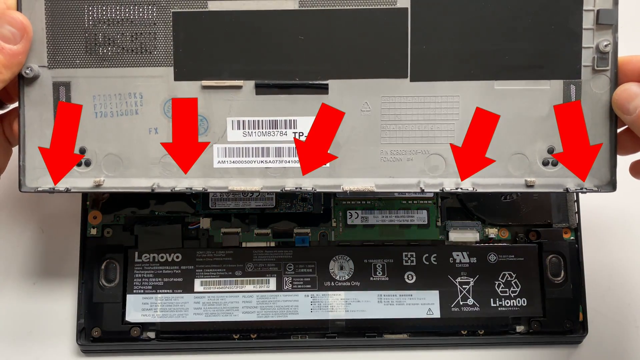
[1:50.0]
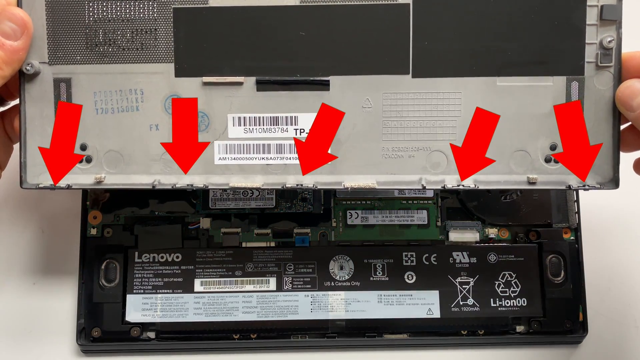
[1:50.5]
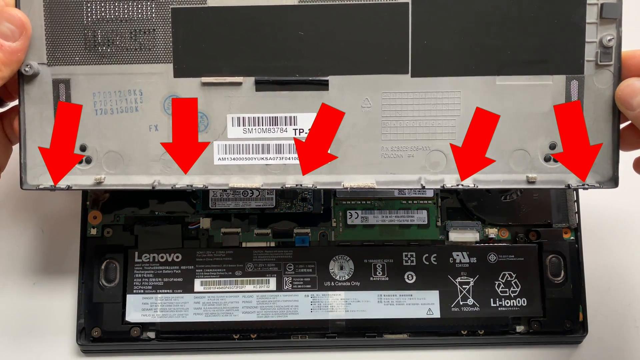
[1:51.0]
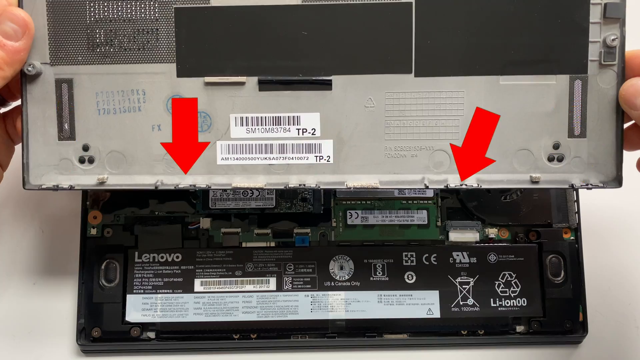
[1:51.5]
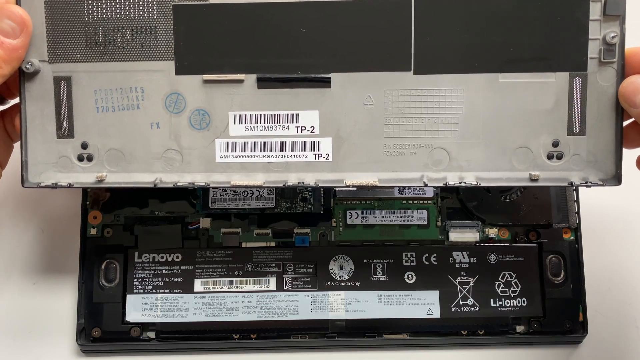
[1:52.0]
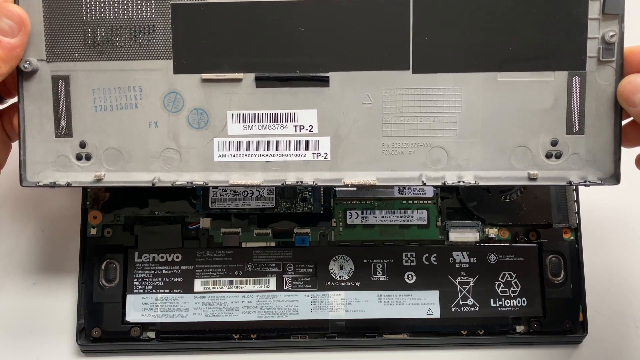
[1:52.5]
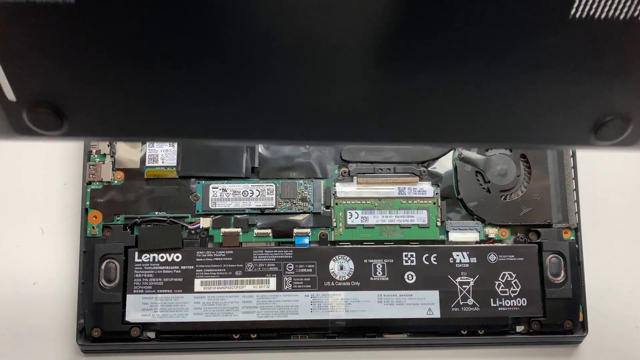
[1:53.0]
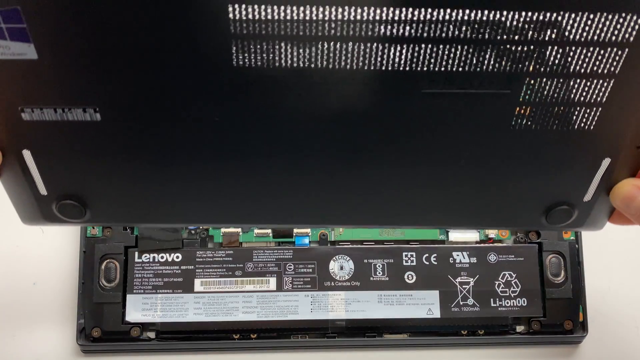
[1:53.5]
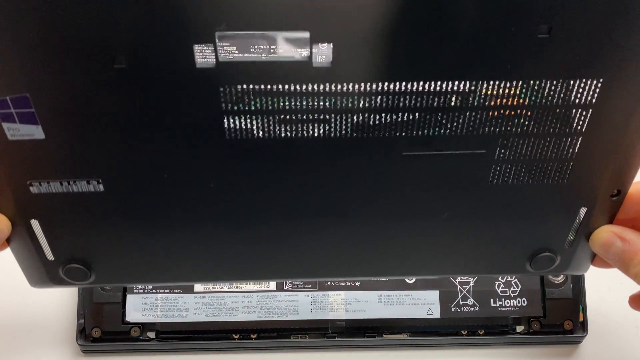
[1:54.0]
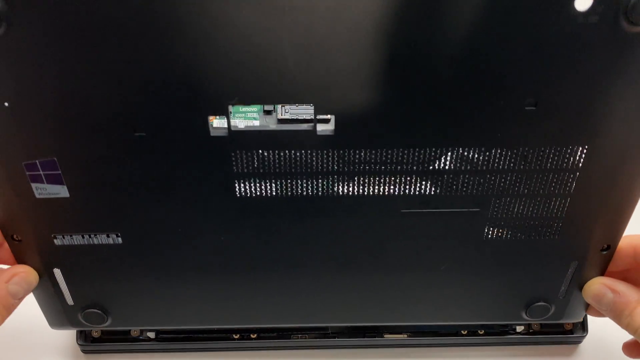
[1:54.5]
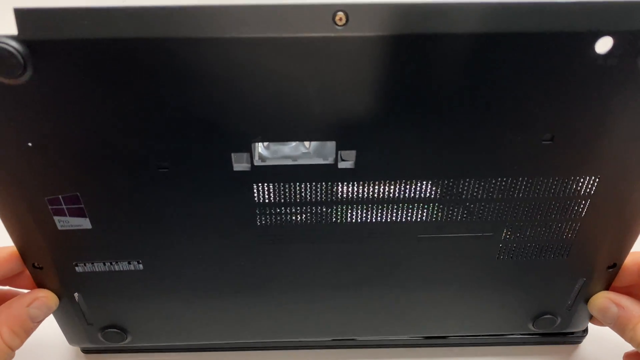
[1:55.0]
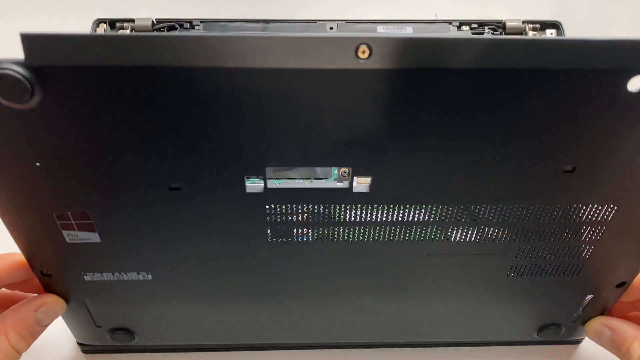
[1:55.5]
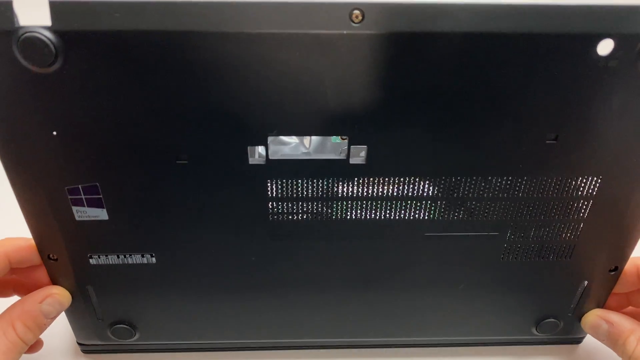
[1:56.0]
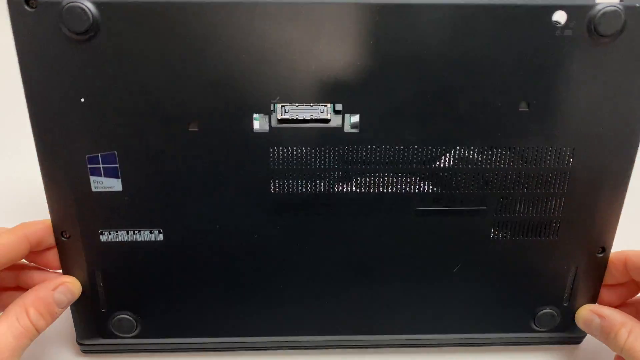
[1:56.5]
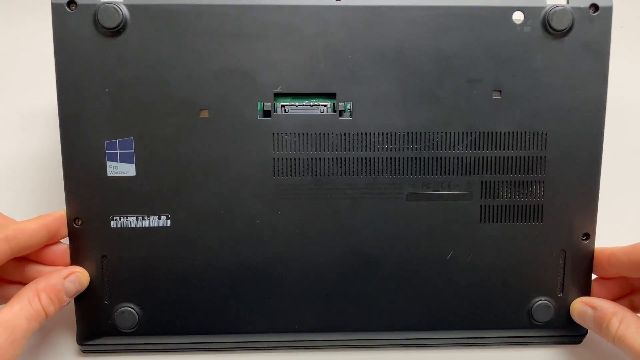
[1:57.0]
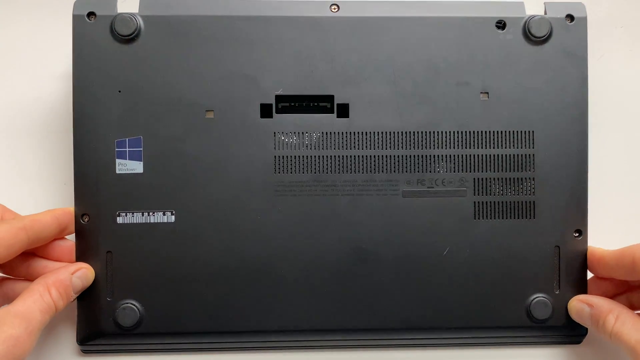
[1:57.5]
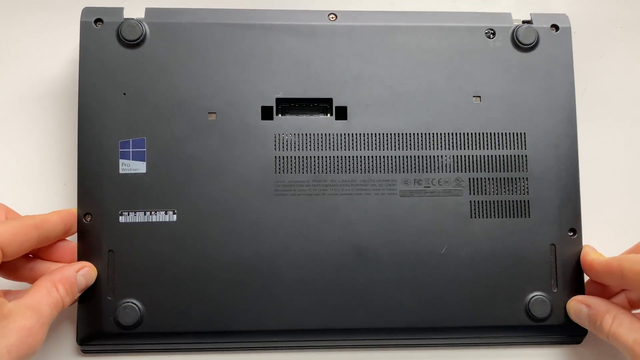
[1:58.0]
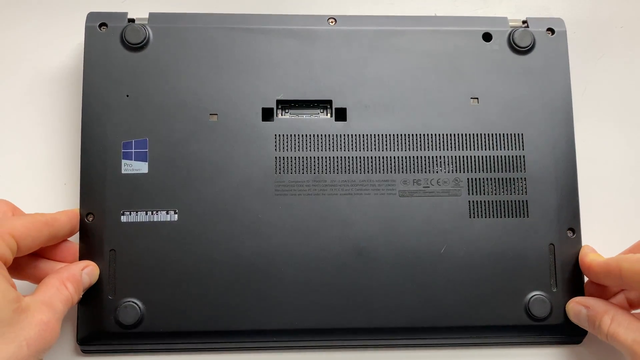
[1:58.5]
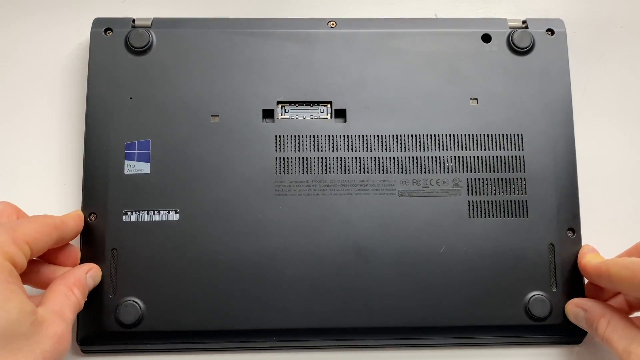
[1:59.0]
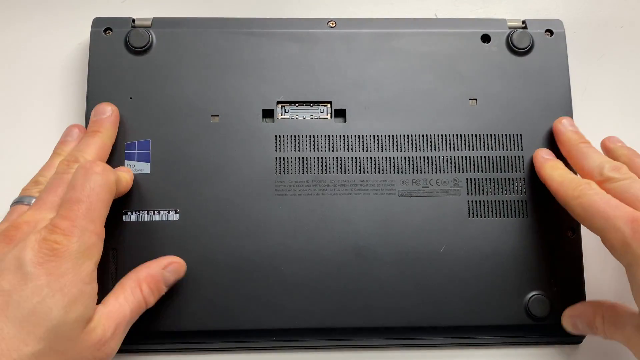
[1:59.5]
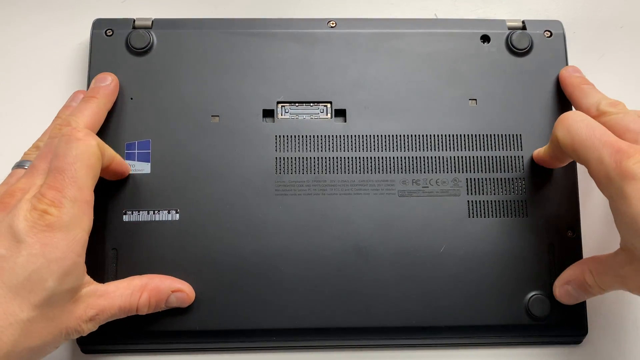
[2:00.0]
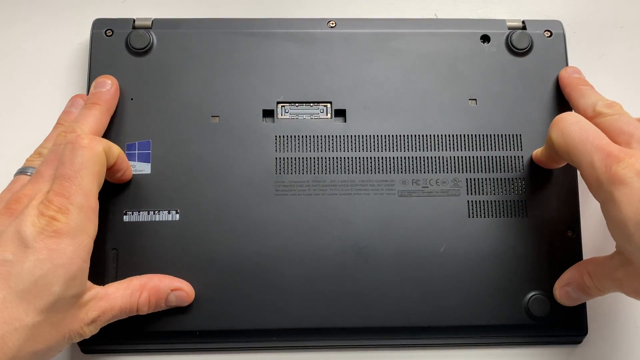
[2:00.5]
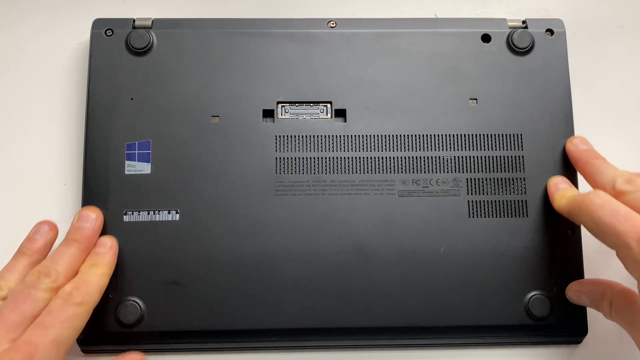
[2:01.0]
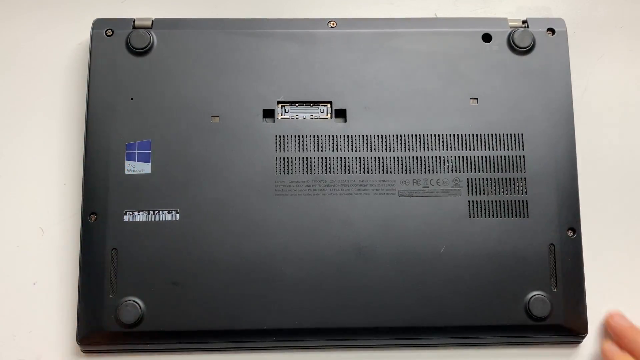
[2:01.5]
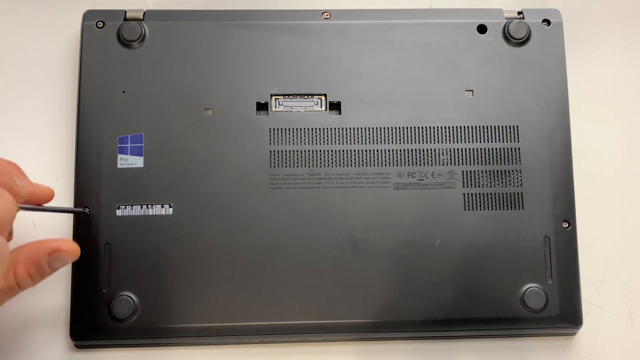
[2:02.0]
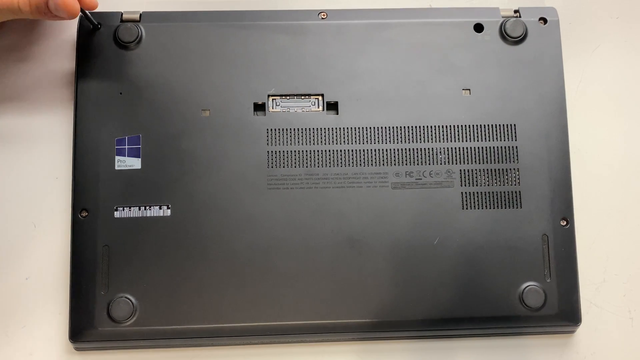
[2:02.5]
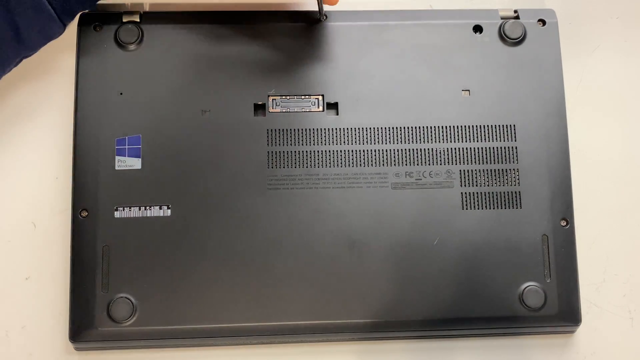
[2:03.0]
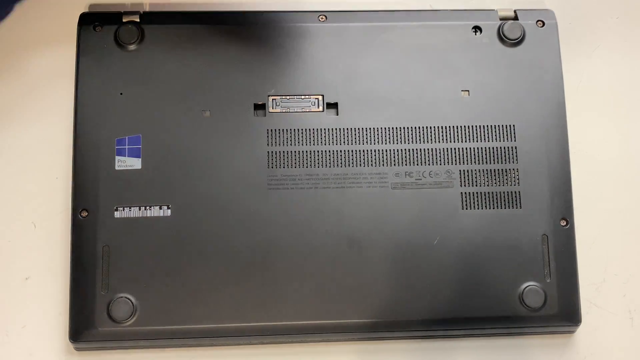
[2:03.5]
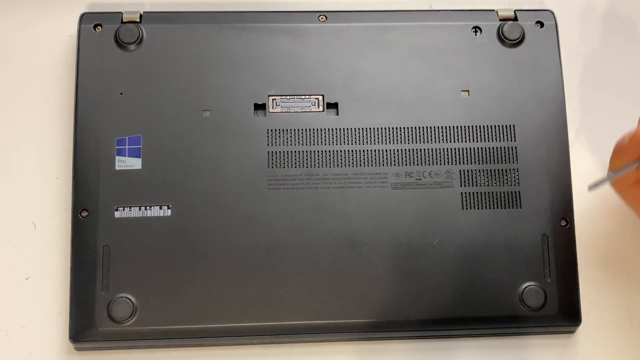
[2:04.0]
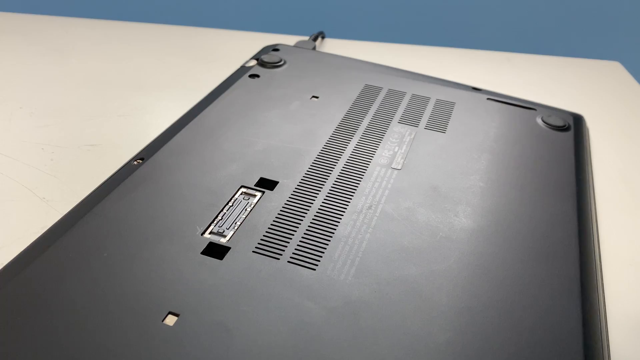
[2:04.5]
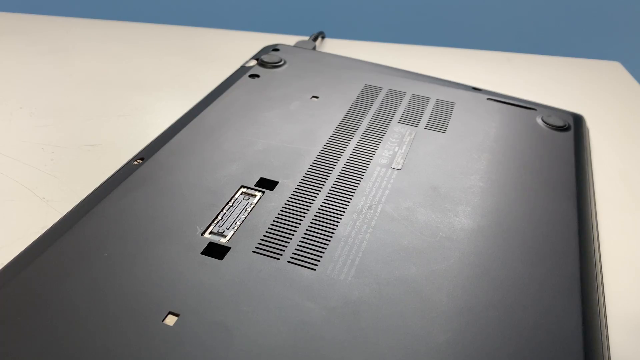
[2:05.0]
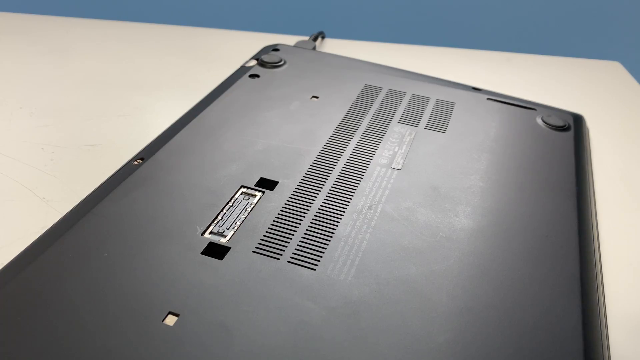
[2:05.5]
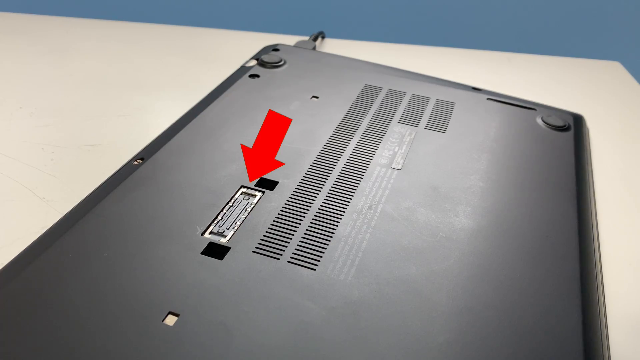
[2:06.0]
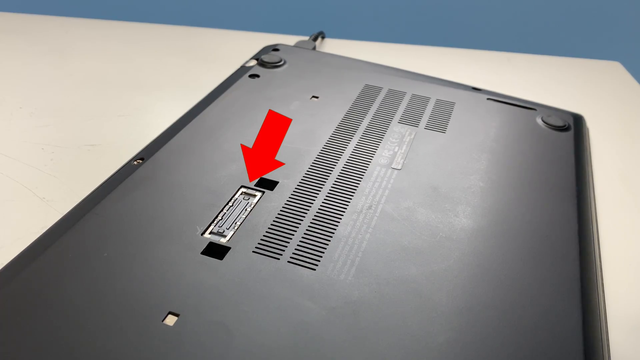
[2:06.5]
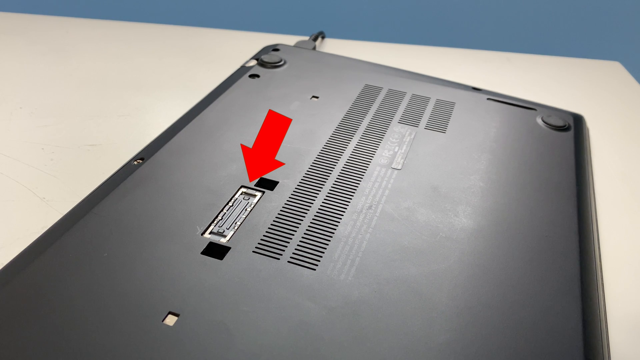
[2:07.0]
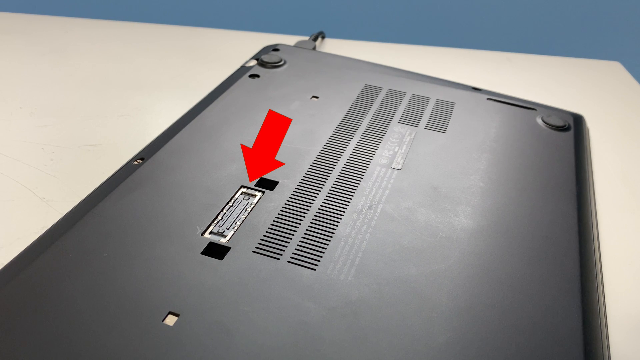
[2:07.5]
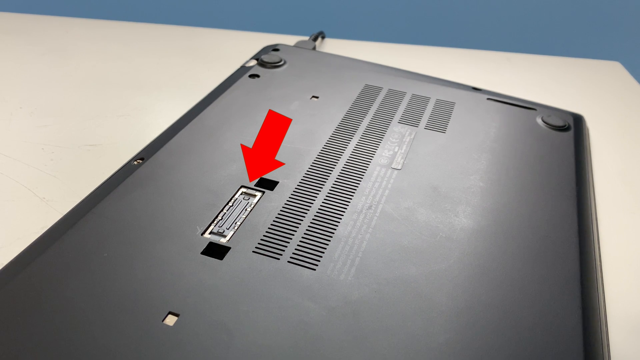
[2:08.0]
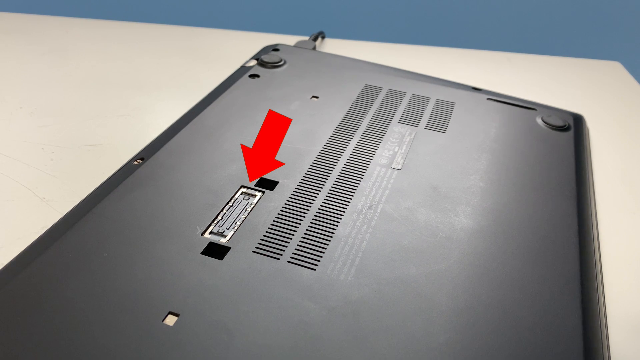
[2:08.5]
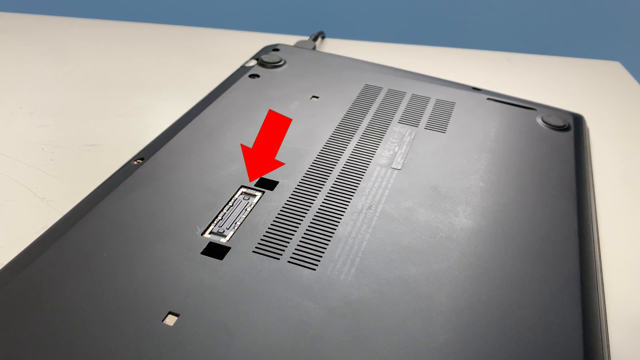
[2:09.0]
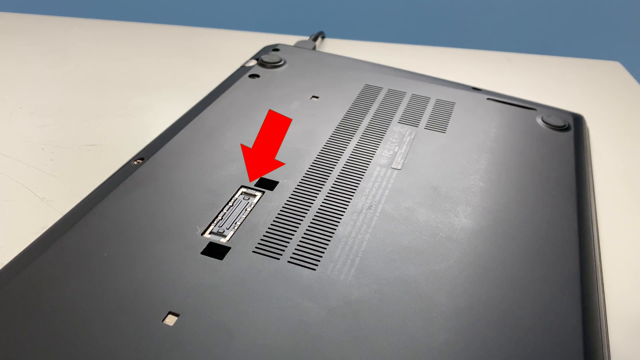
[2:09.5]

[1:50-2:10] The man lines the back panel up on the laptop, slowly pushes it down, and screws in all of the tiny screws to reattach it. Then, with the laptop face down, he points out the plug on the bottom of the laptop that he showed before unscrewing the back panel. A red animated arrow appears pointing to that plug.